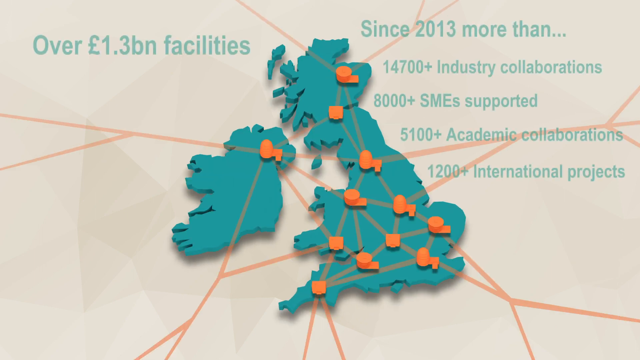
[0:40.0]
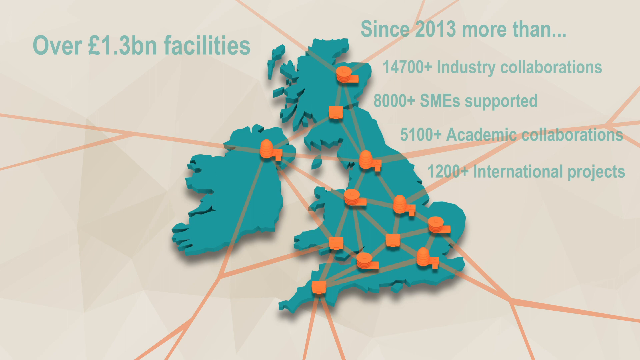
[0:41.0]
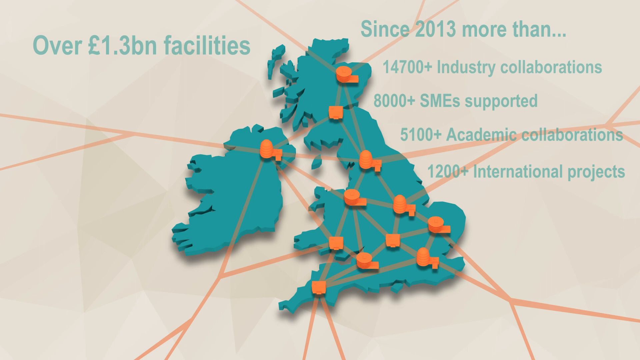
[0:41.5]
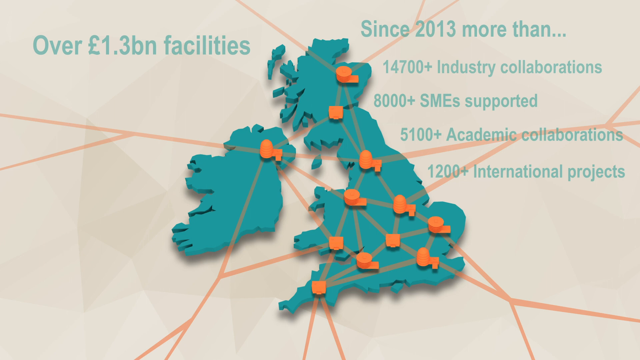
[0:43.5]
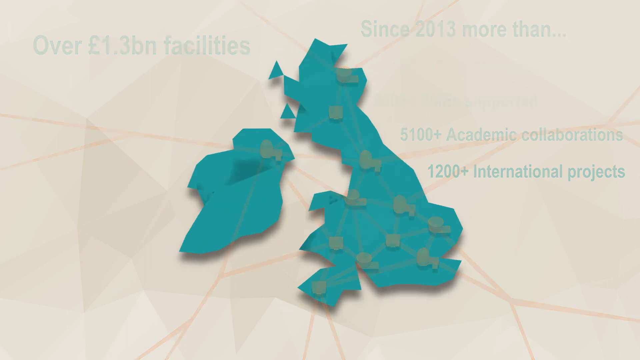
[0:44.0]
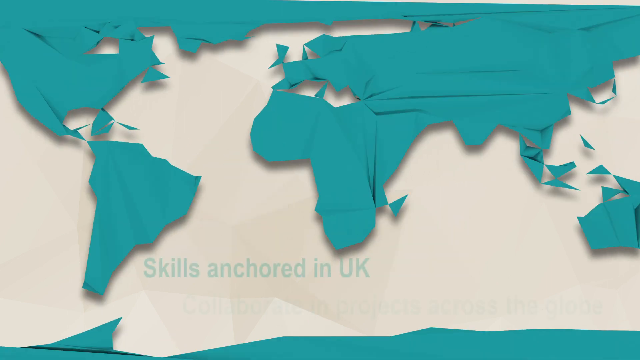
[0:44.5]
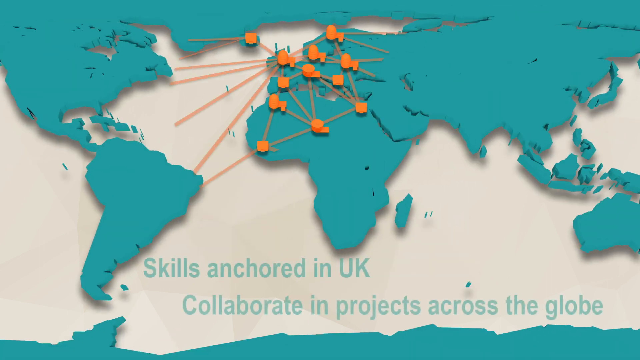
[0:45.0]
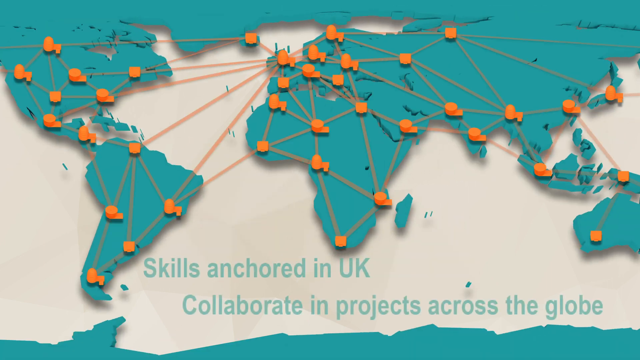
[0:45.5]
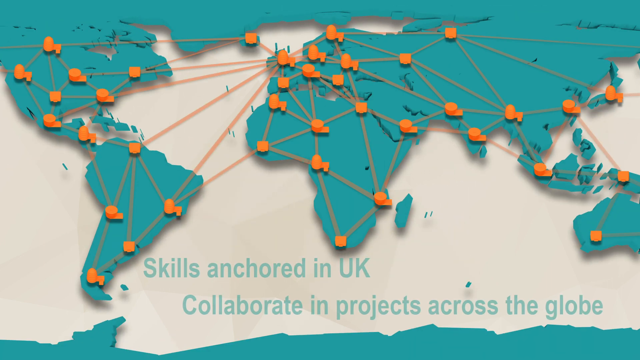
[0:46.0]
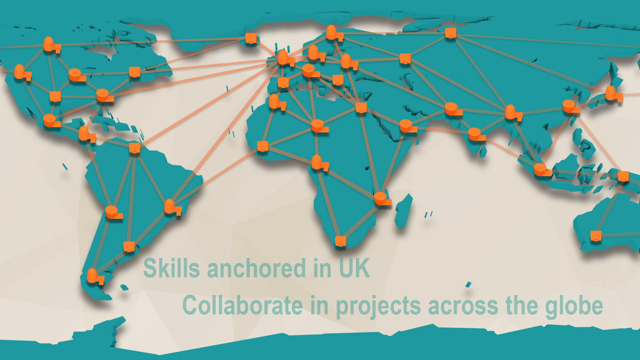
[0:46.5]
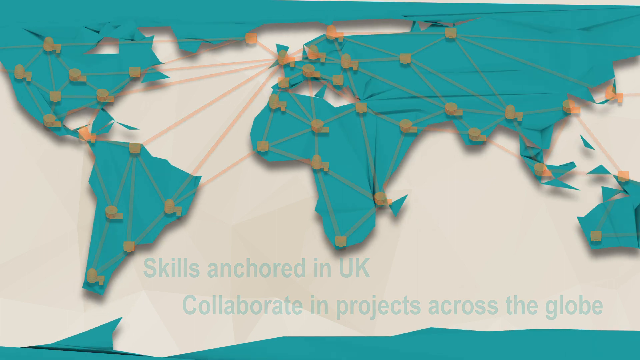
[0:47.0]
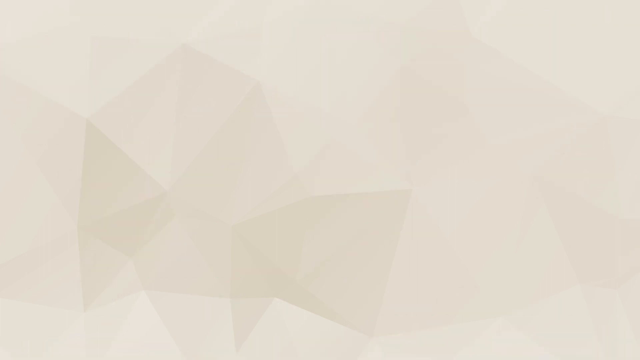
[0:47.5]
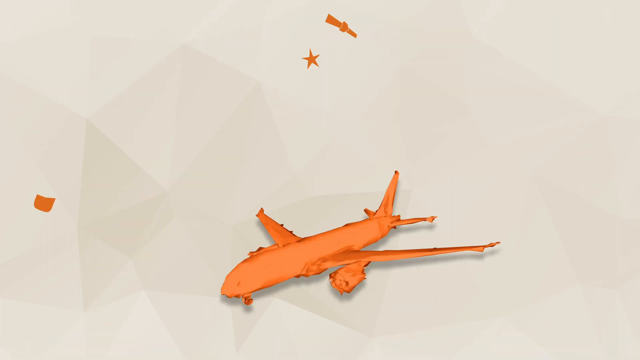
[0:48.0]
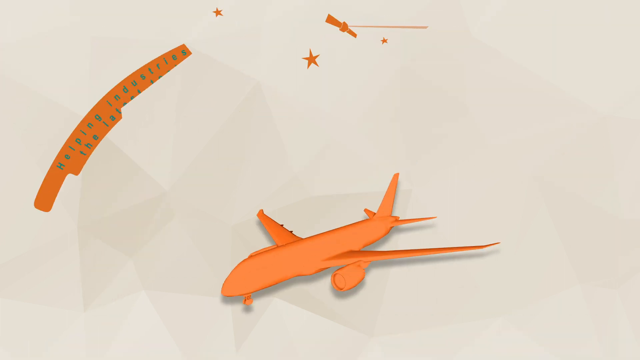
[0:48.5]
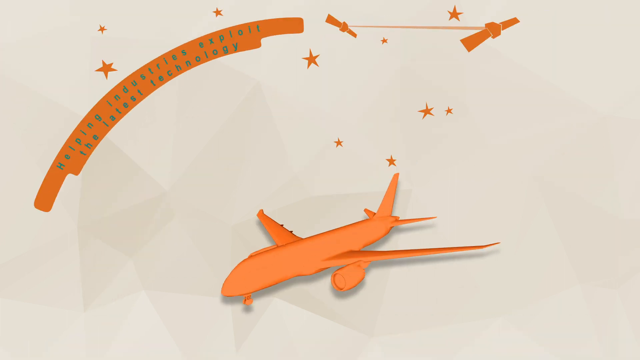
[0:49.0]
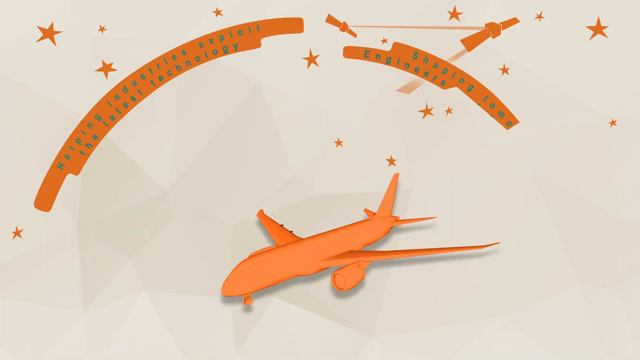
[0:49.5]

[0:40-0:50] The infographic animation moves to the next section, on skills anchored in the UK, with planes shown as part of it. It details the success of the UKRI: since 2013, more than 14,000 industry collaborations, more than 8,000 SMEs supported, and more than 5,000 academic collaborations on over 1,200 international projects.